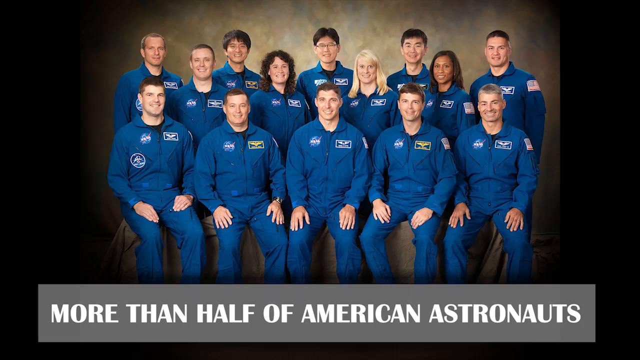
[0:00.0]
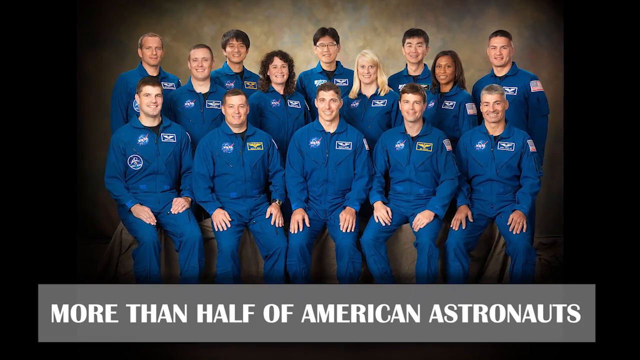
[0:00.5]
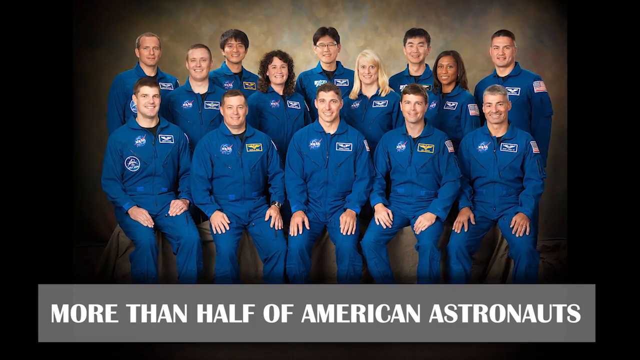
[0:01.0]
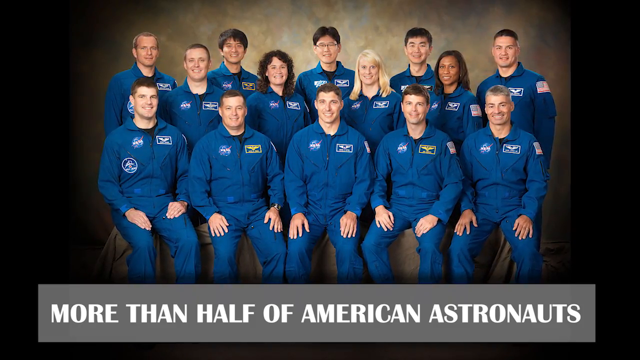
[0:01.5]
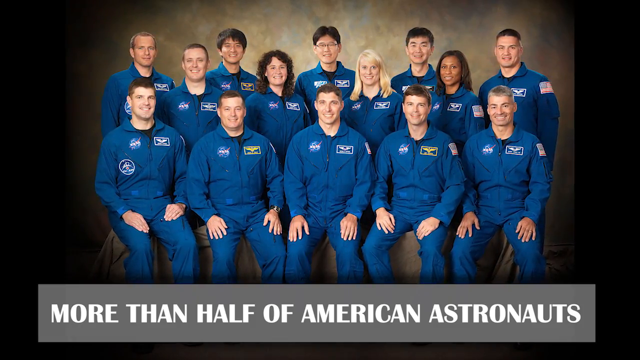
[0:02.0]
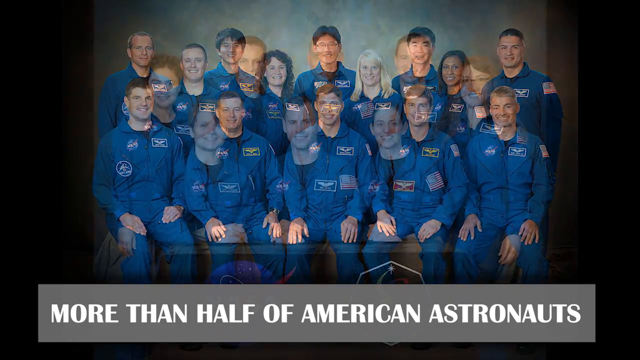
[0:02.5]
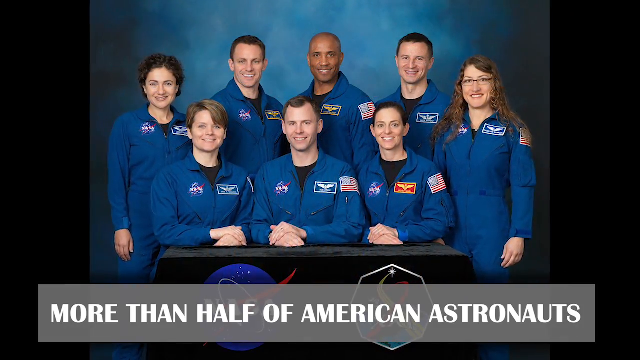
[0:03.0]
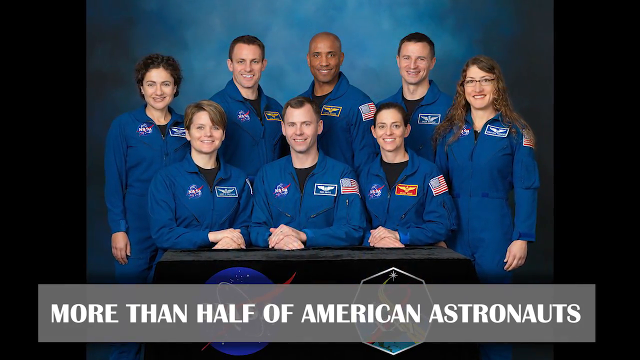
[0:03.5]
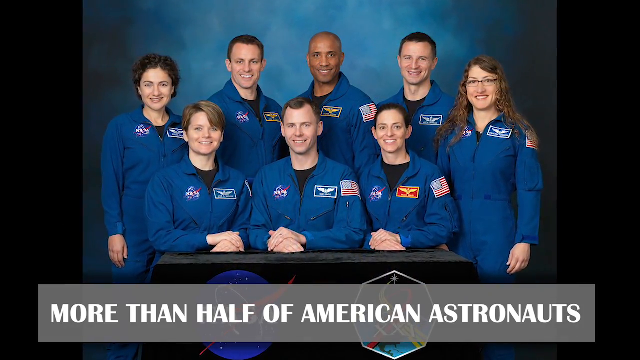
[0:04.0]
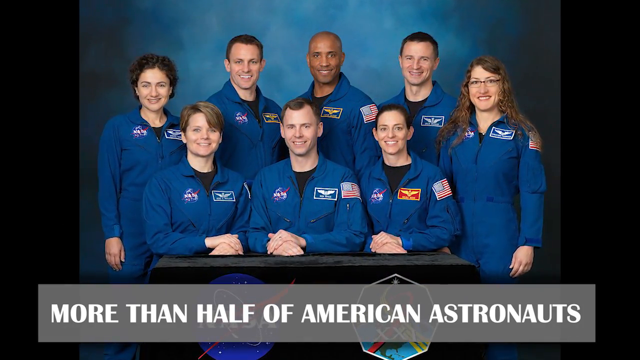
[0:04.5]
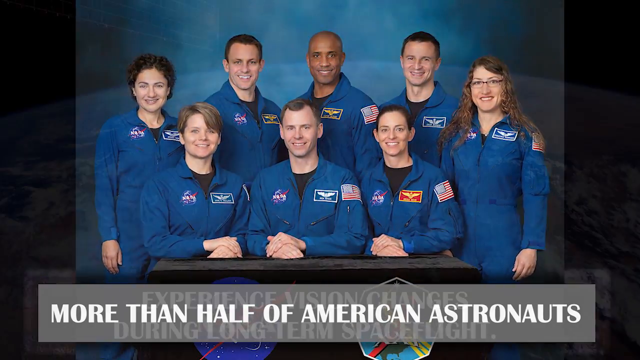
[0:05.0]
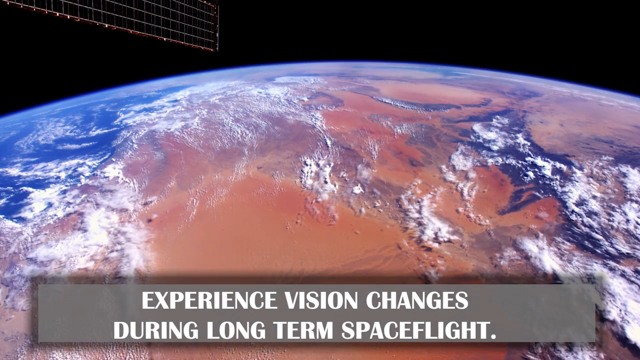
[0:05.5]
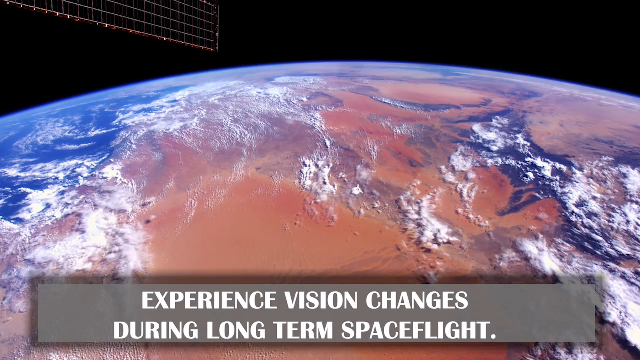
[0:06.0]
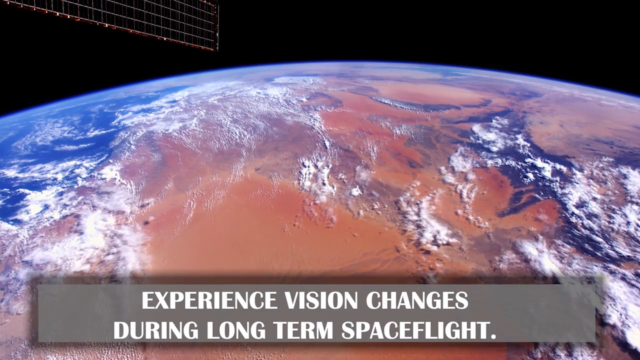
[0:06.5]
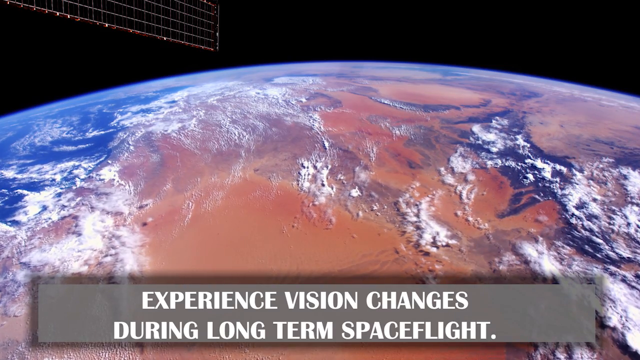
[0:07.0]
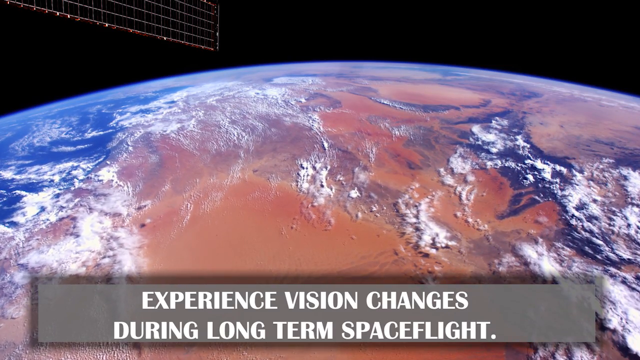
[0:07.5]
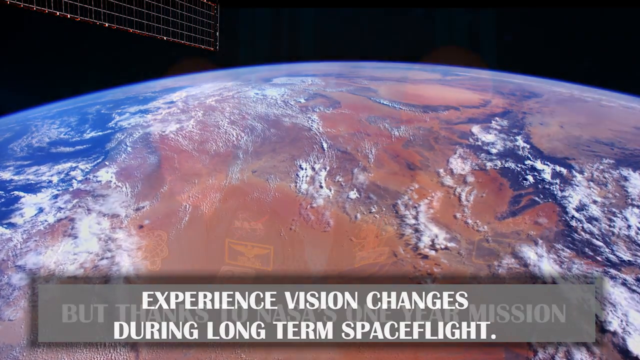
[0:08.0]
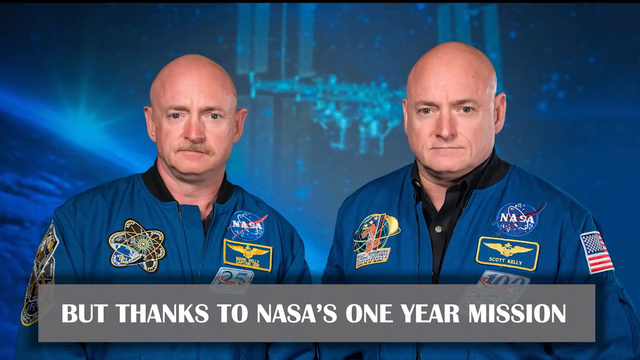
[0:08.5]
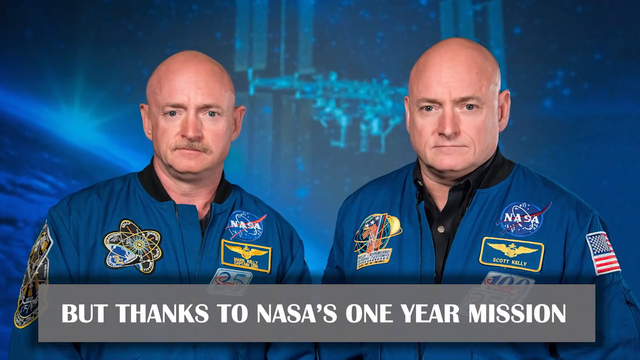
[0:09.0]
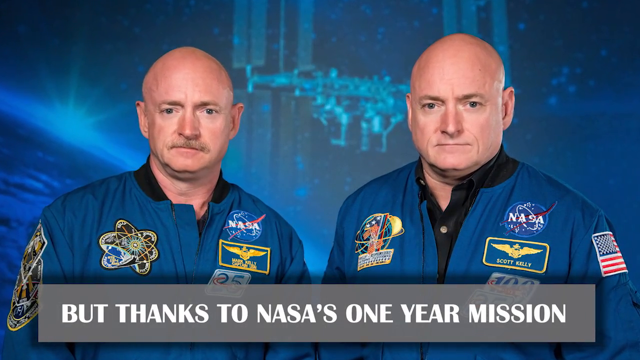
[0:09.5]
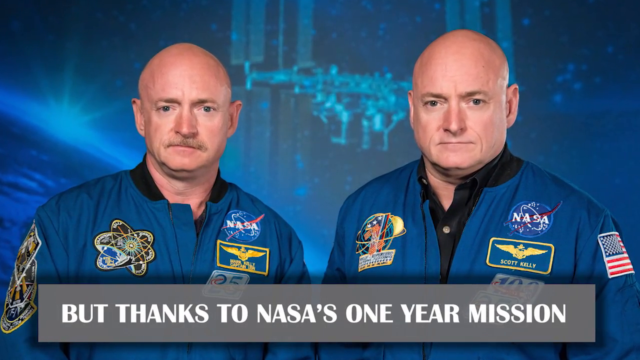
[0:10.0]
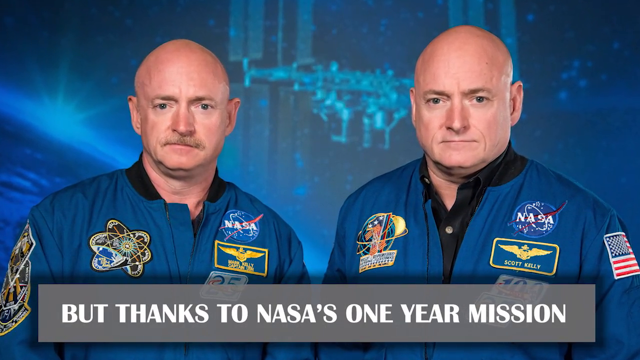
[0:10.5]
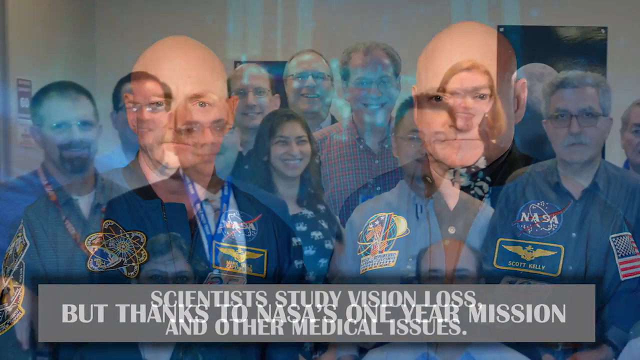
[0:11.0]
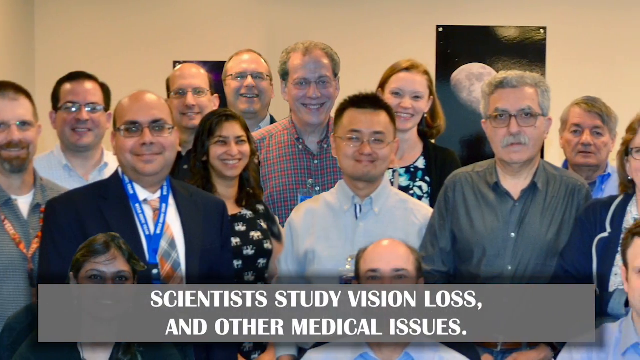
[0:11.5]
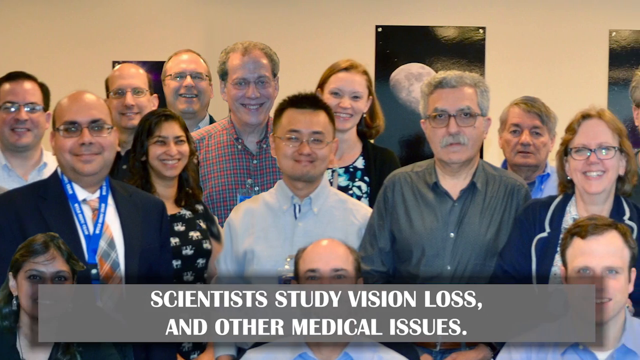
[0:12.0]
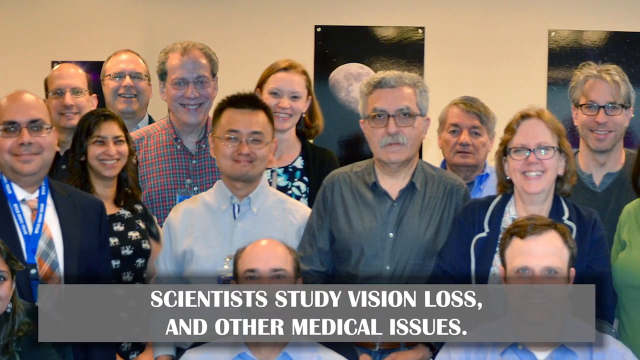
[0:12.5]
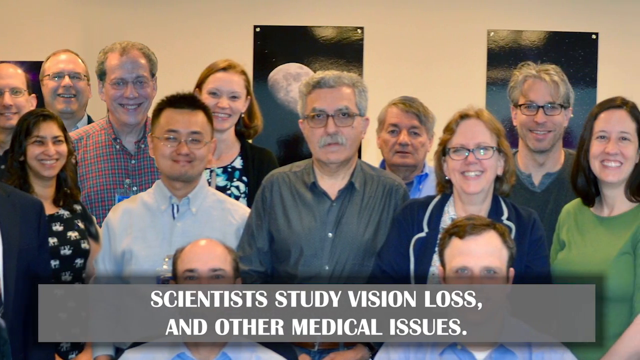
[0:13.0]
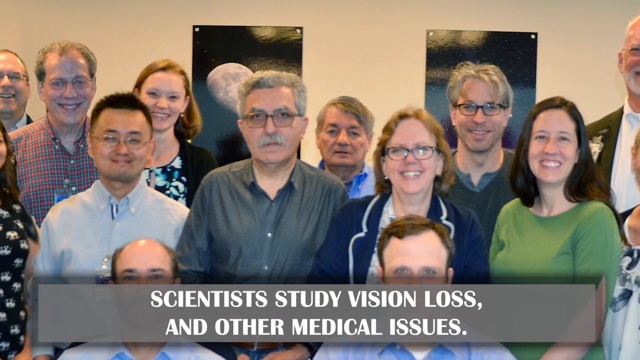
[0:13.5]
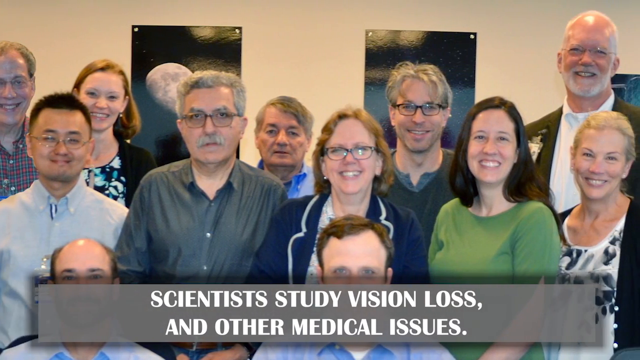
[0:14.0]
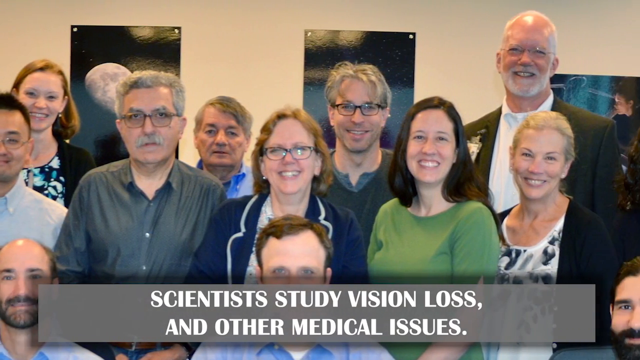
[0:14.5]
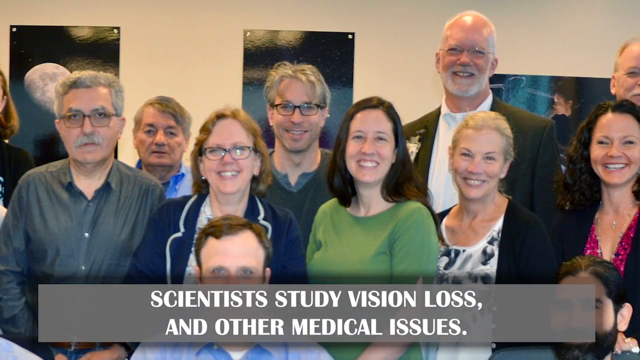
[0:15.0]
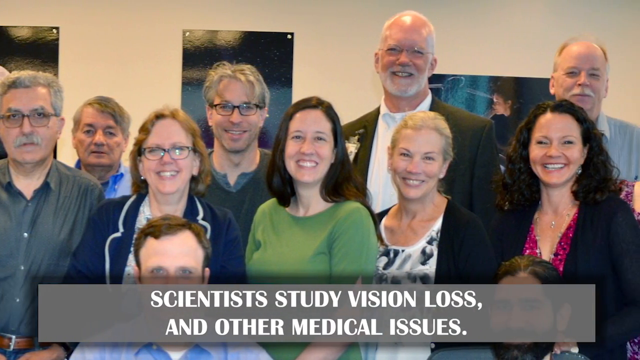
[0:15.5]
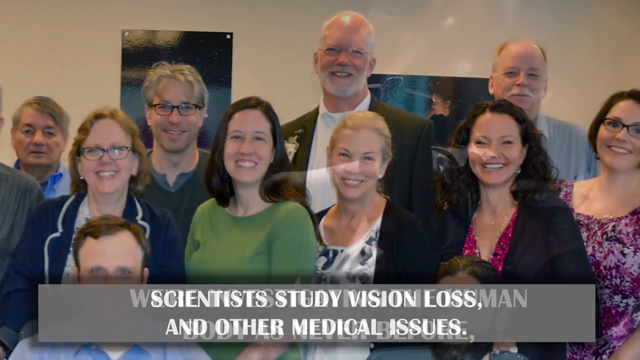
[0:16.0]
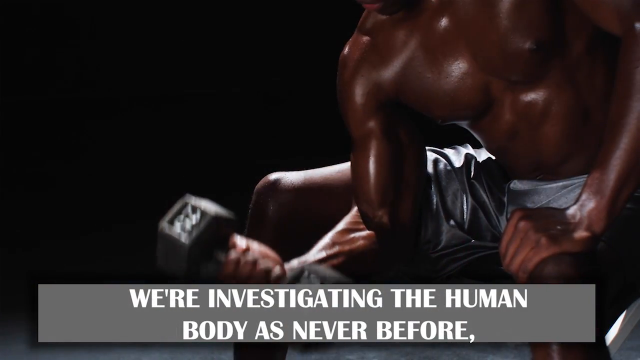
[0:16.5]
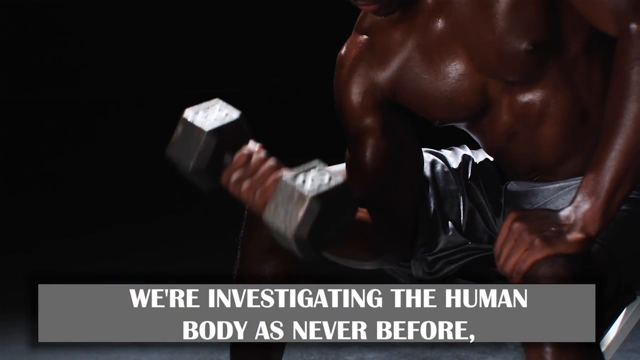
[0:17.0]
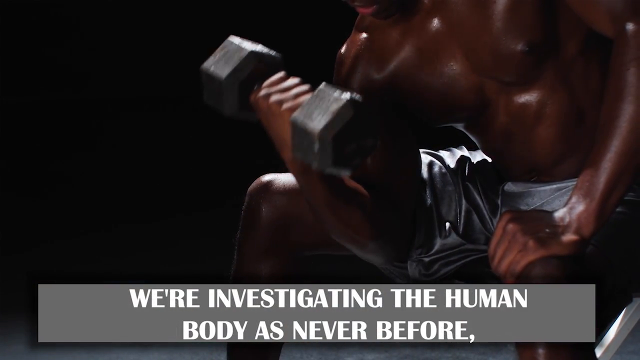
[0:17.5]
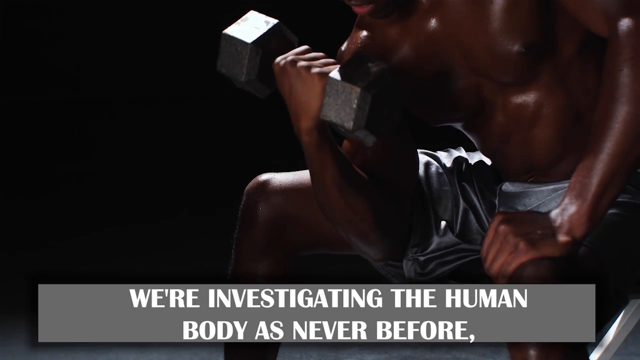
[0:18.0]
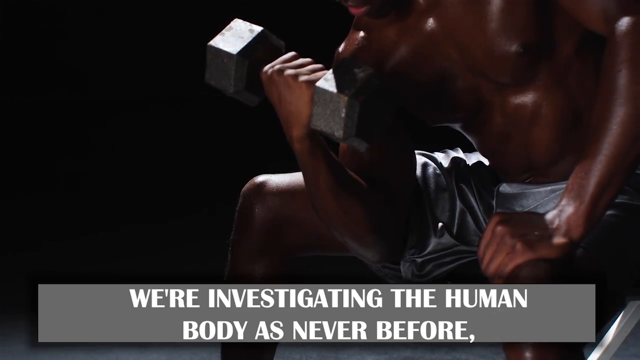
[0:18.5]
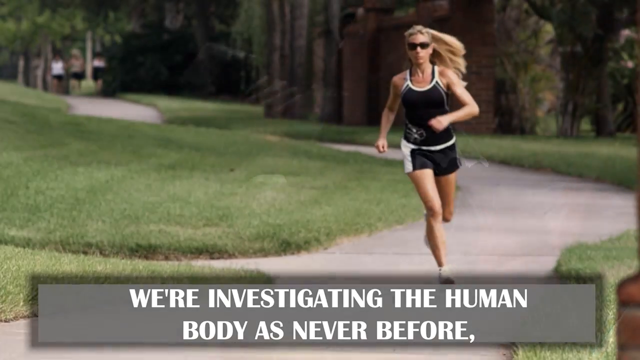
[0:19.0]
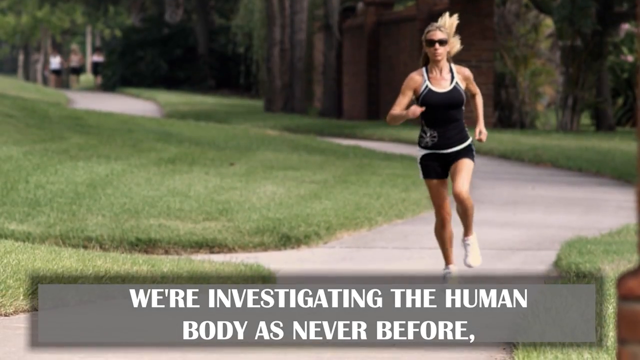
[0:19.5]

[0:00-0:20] The video opens with a group photograph of 14 astronauts, all wearing blue jumpsuits. Five men sit in the front row, and the rest, a mix of men and women, stand behind them. Along the bottom of the screen the text reads "more than half of American astronauts." Next comes a picture of eight astronauts in blue jumpsuits, three sitting and five standing above the others. The image changes to a view from space looking down on the Earth, with a little bit of a satellite visible in the top left, and the text reads "experience vision changes during long term spaceflight." The text then reads "but thanks to NASA's one year mission" as a picture of just two astronauts in blue jumpsuits appears. It switches to a picture of a team of people dressed in normal clothing rather than jumpsuits, with the text "scientists study vision loss and other medical issues" along the bottom; the view scans across the crowd in the picture. Next is a totally black screen except for a man sitting down doing bicep curls with a weight, with gray text along the bottom reading "we're investigating the human body as never before," outlined in a blackish-gray text box. The shot ends on an image of a woman jogging on a sidewalk.